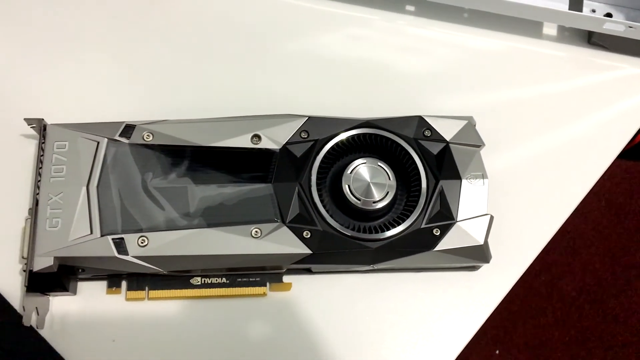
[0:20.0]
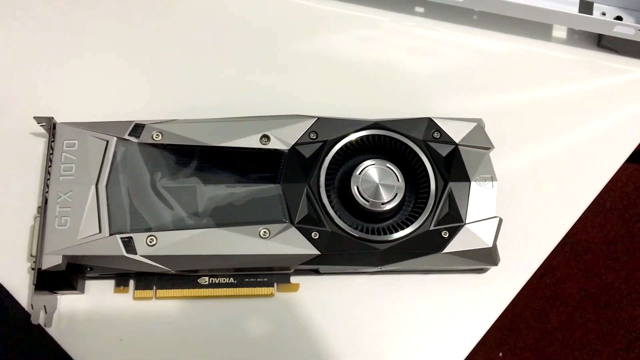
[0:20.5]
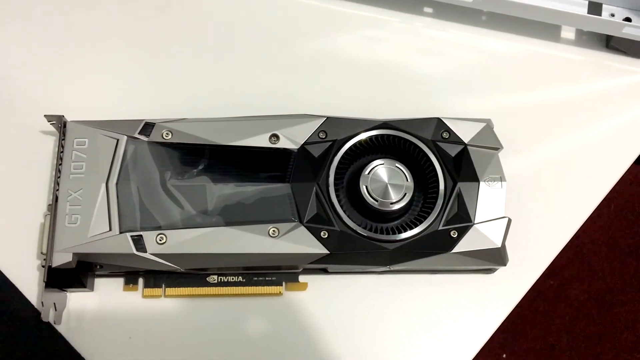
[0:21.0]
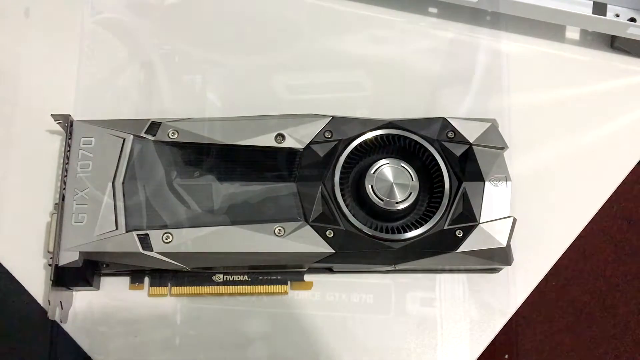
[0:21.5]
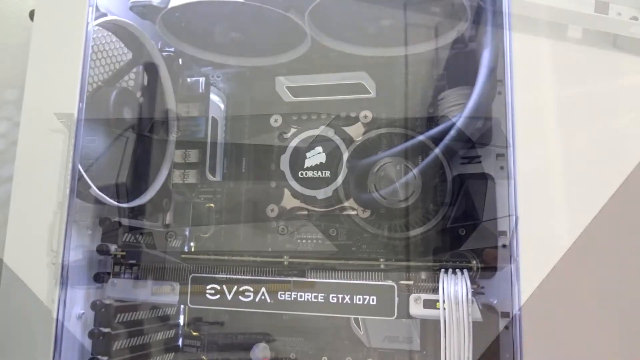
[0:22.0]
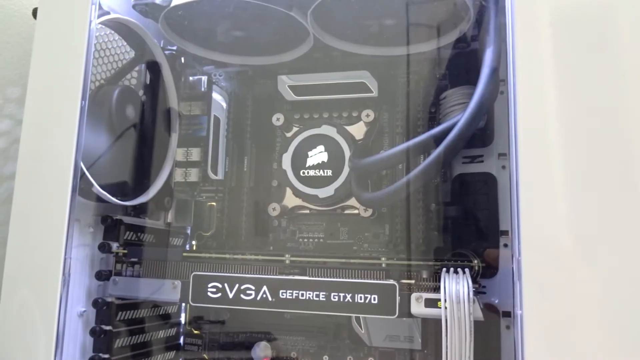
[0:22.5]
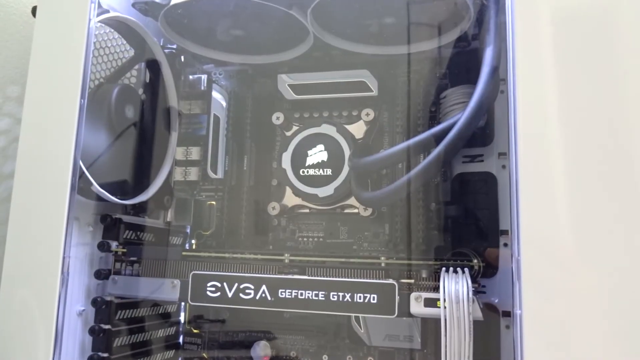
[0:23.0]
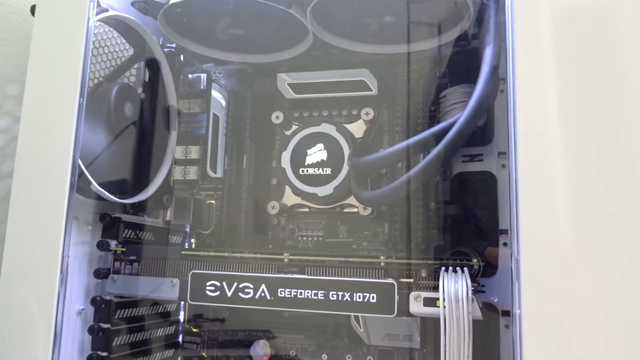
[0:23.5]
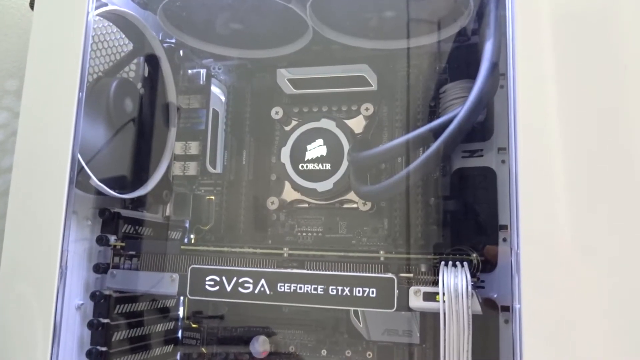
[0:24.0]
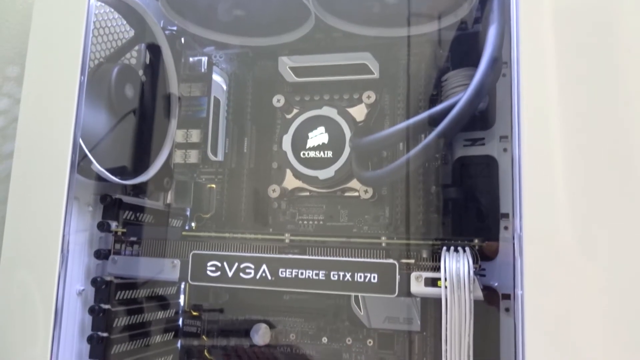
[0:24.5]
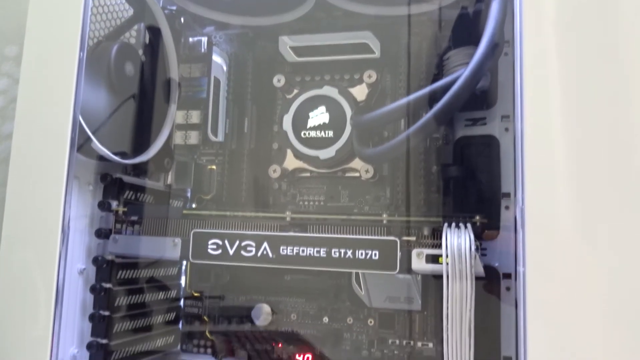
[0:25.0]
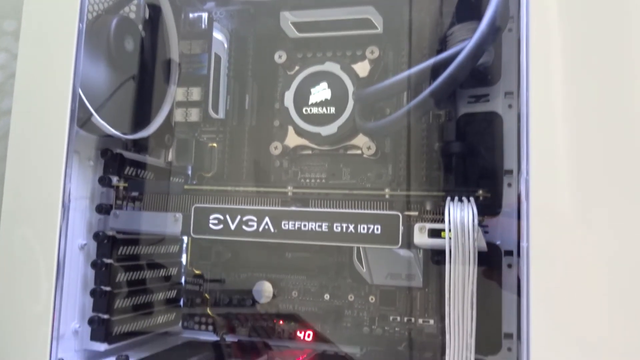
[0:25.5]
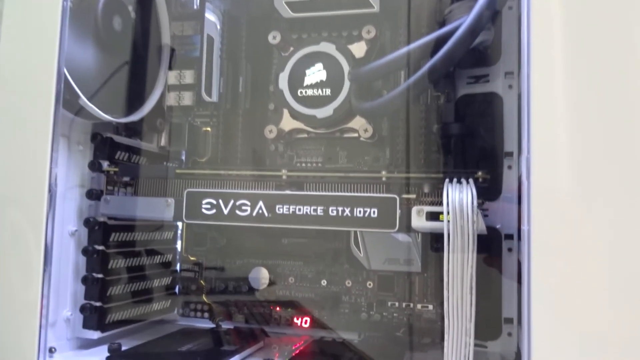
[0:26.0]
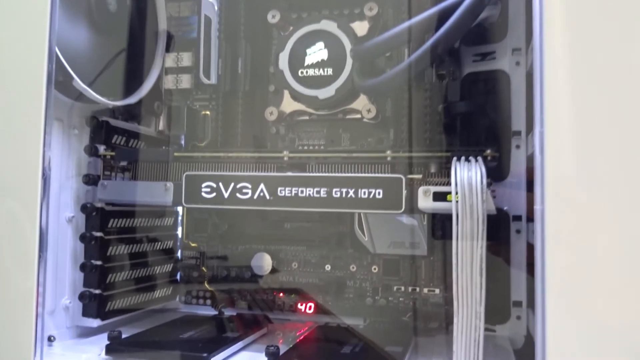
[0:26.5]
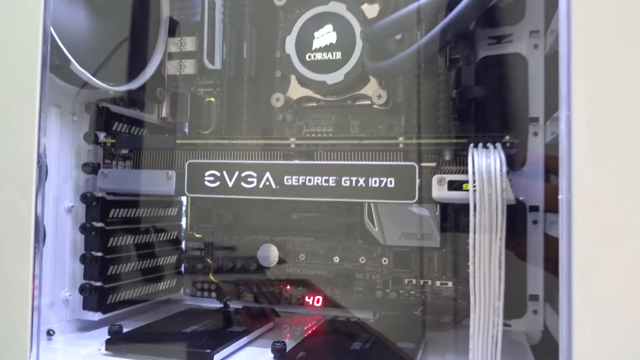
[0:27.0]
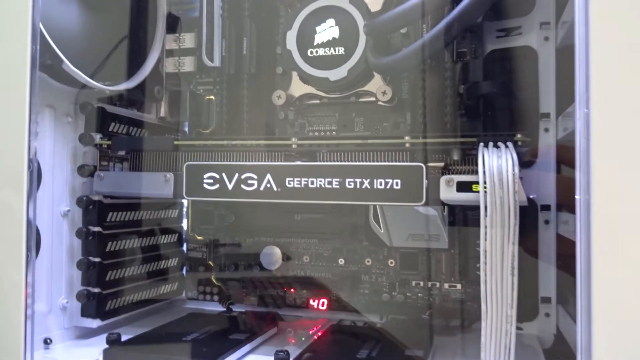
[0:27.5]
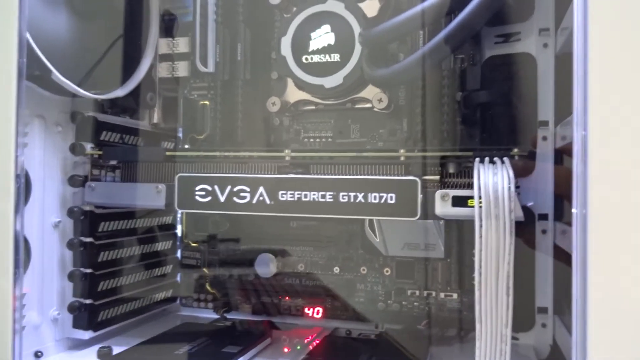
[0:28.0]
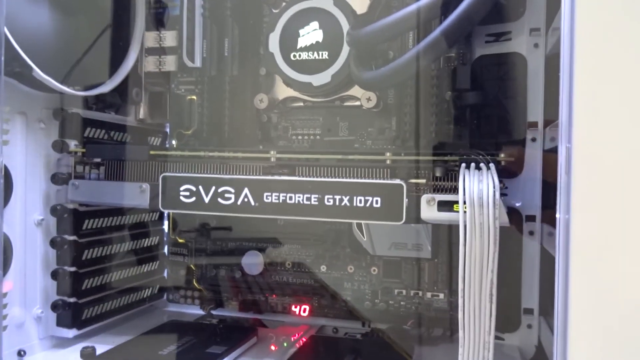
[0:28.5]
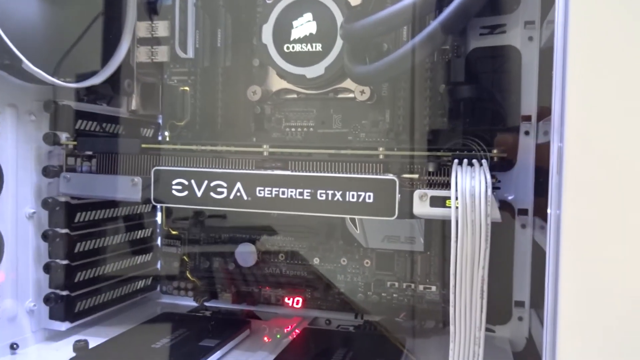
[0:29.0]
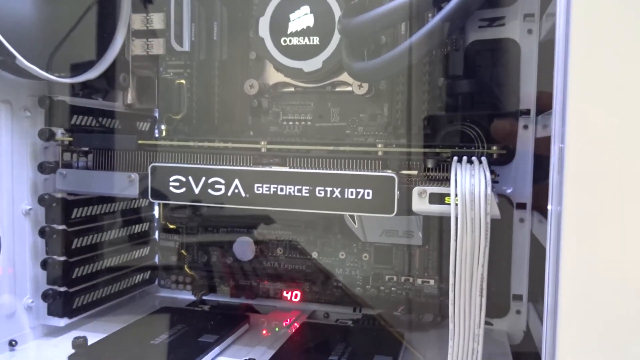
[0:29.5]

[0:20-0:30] The GTX 1070 video card is shown, and then the view moves to the card installed inside a computer that is running. The motherboard appears to be from Corsair; the Corsair symbol is visible in the very center of the computer case, which is clear. The EVGA GeForce GTX 1070 is installed inside this large desktop computer with a clear case on the outside.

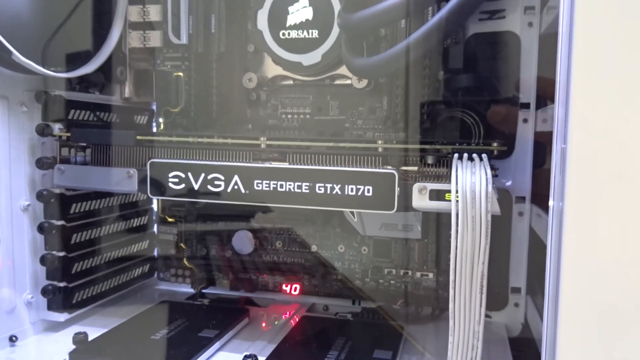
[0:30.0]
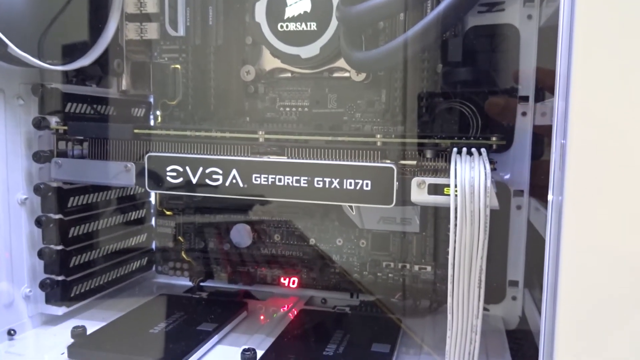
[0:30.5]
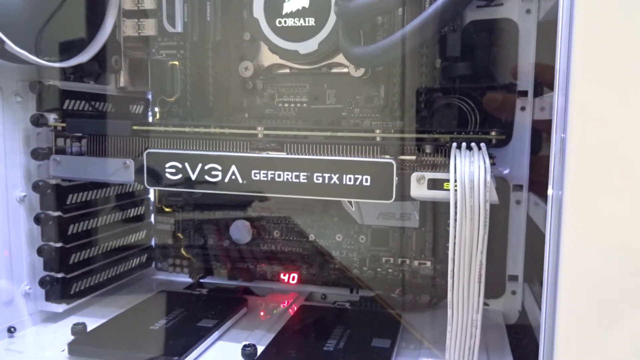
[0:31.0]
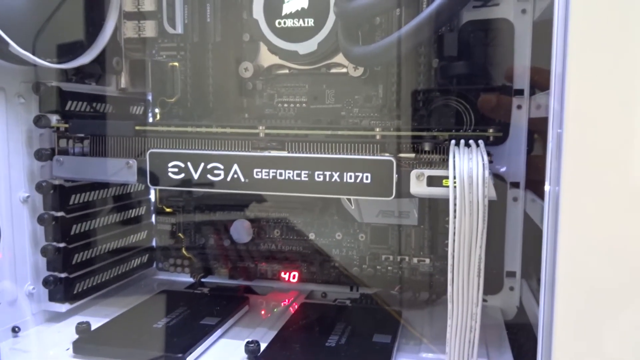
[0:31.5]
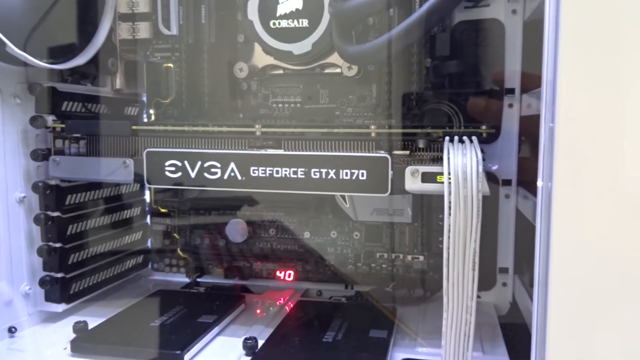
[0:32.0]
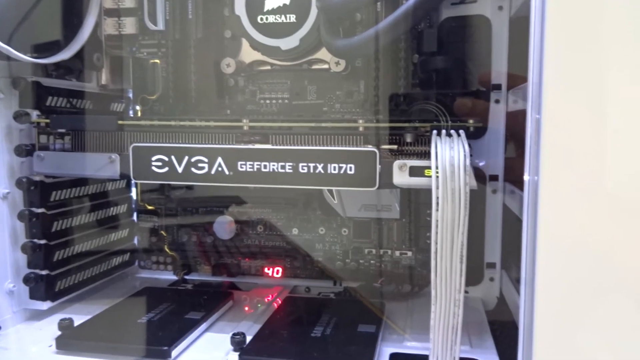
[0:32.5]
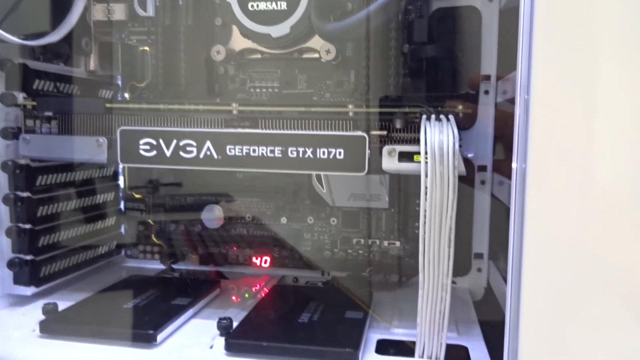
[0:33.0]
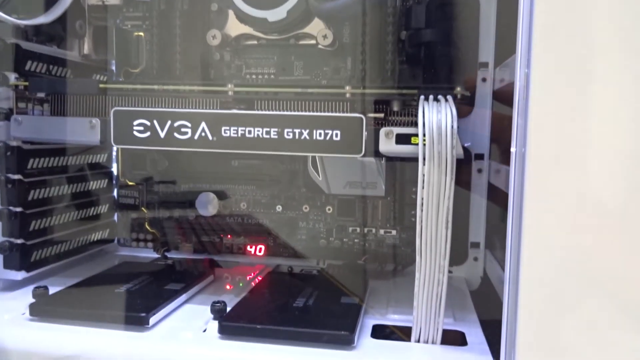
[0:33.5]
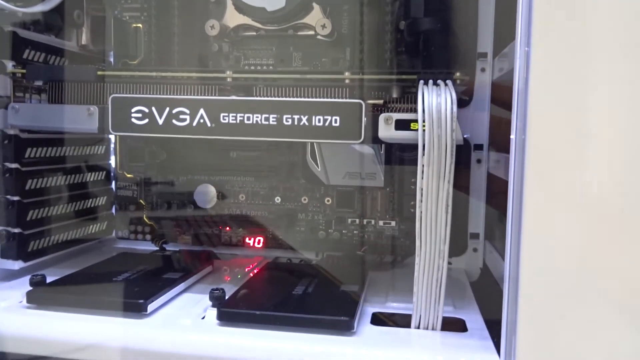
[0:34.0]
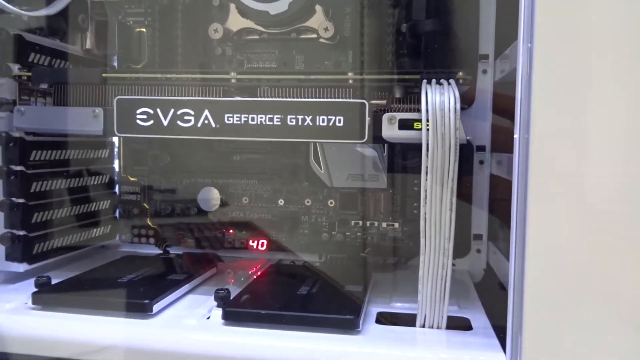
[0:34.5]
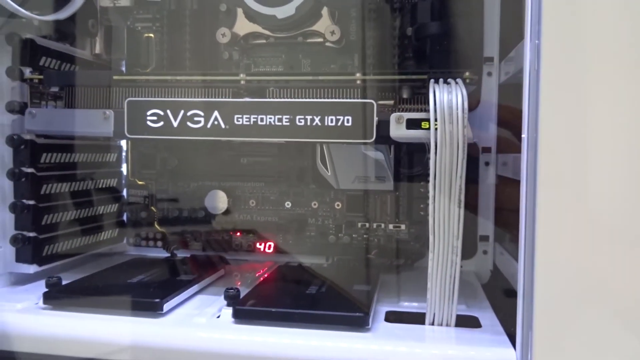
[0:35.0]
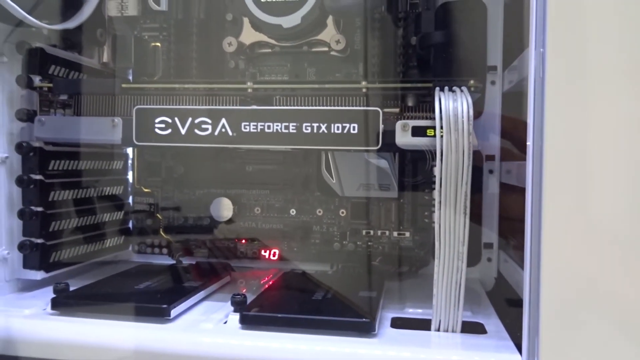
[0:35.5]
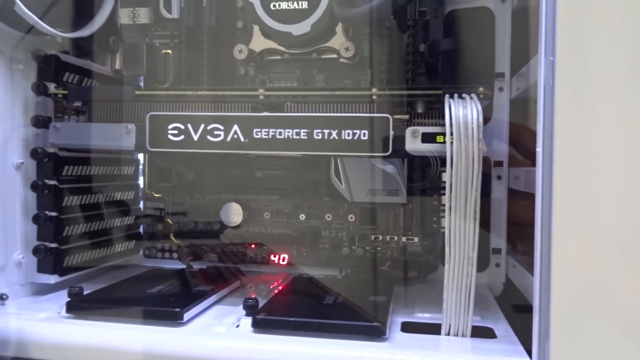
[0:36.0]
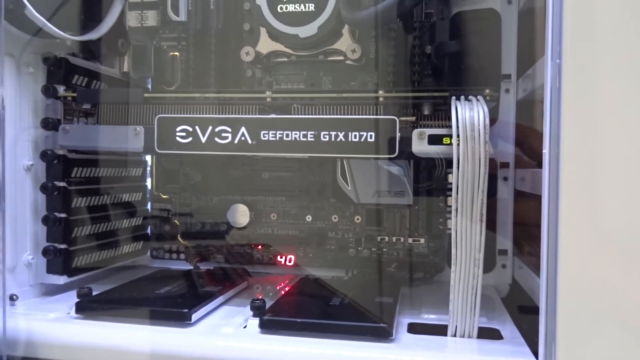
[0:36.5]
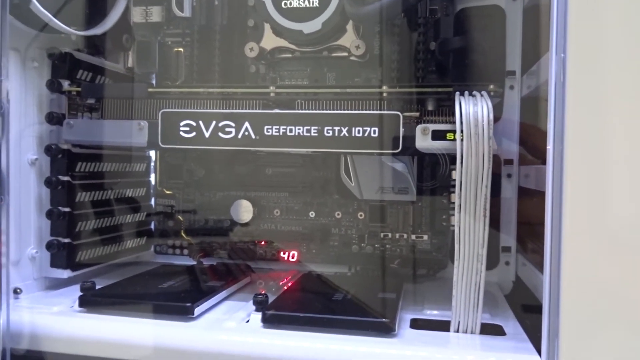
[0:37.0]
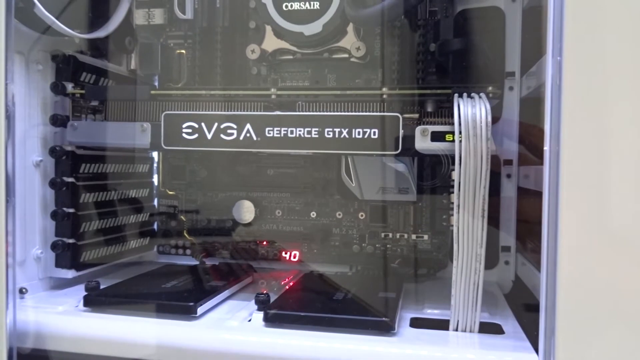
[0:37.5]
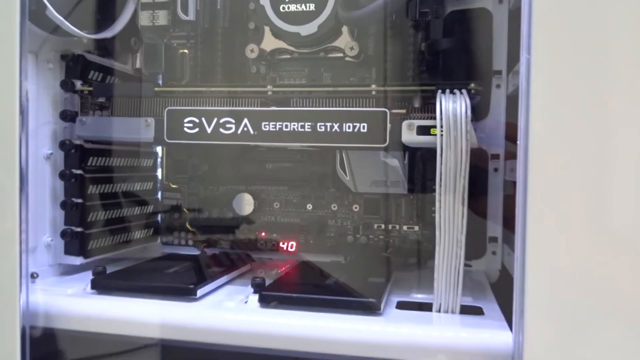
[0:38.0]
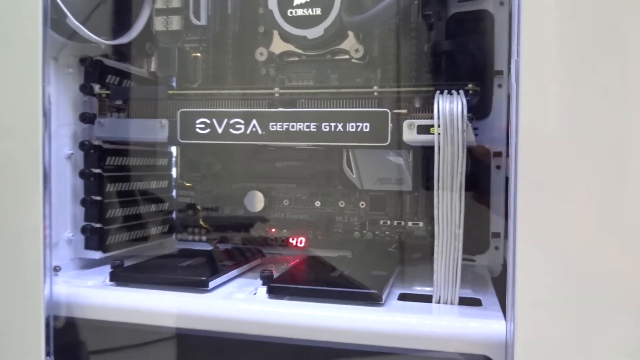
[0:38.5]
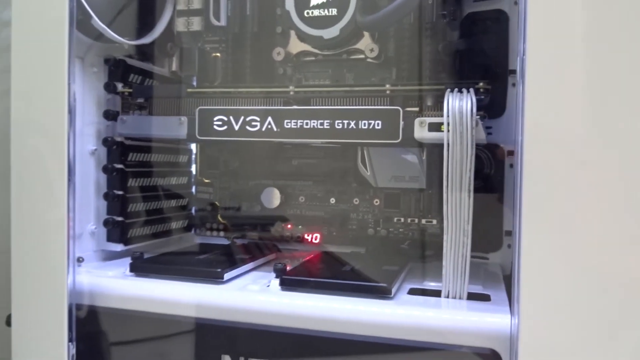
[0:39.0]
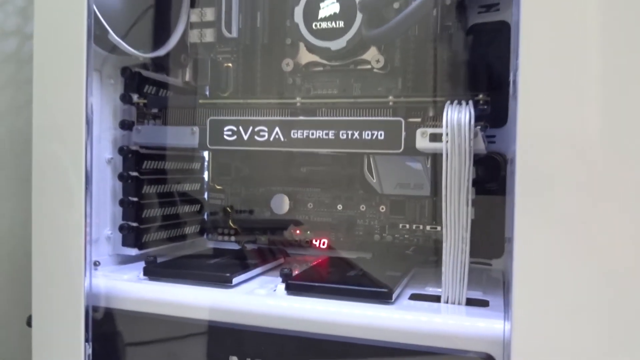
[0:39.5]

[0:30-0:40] The EVGA GeForce GTX 1070 video card is mounted inside a desktop tower that appears to be from Corsair, with the Corsair logo visible inside. One side wall of the tower is clear plexiglass, so all of the components can be seen running inside. Below the GeForce card, on the lower part of the interior, a digital readout shows "40"; what it measures is unclear. The computer looks like a custom build.